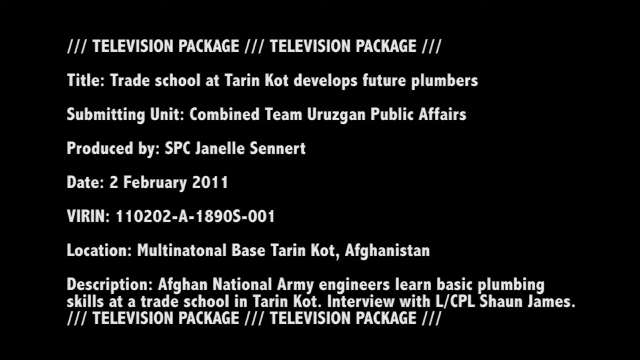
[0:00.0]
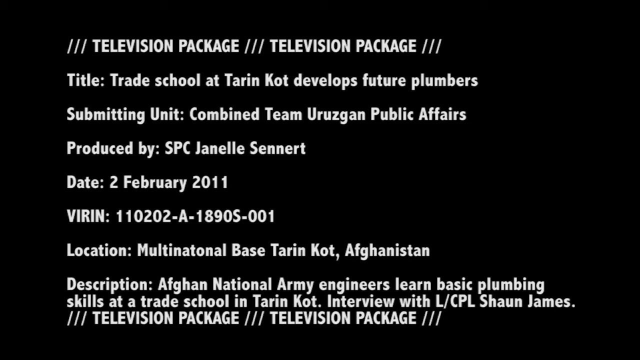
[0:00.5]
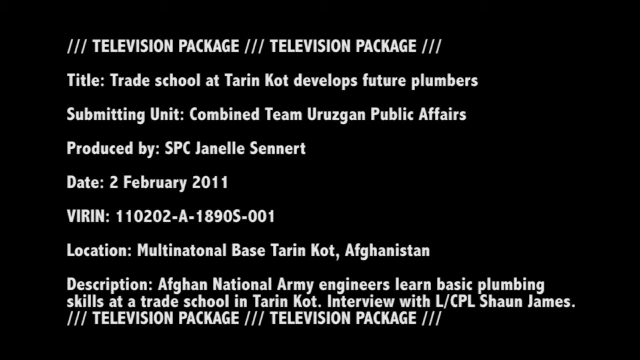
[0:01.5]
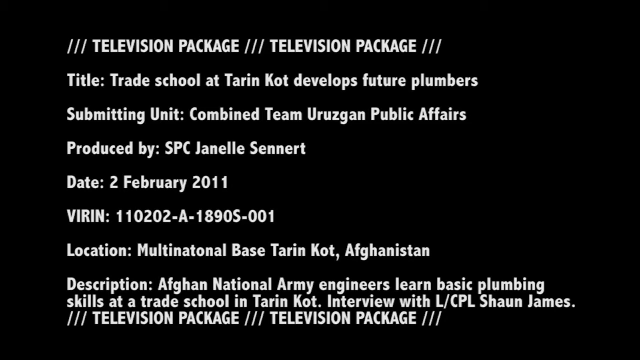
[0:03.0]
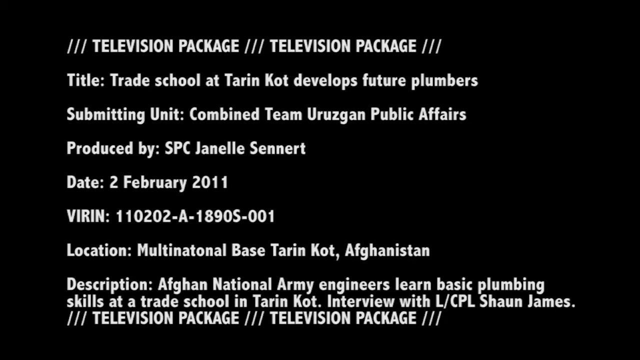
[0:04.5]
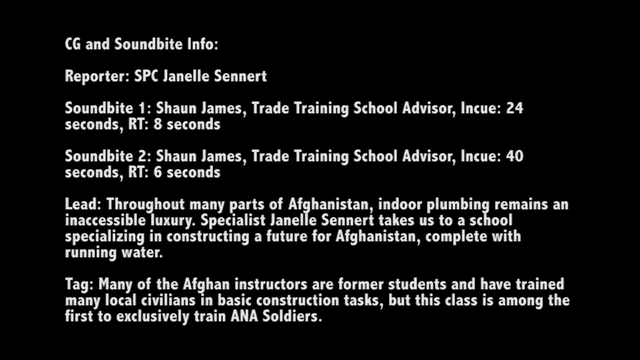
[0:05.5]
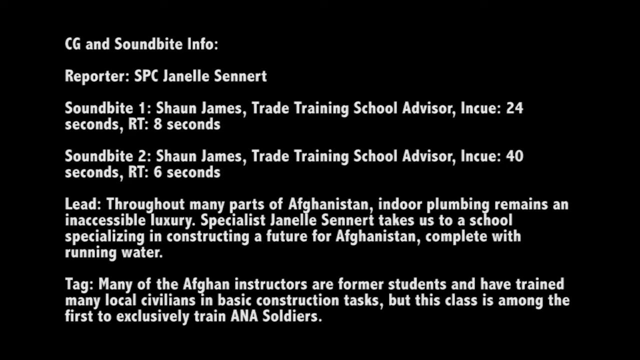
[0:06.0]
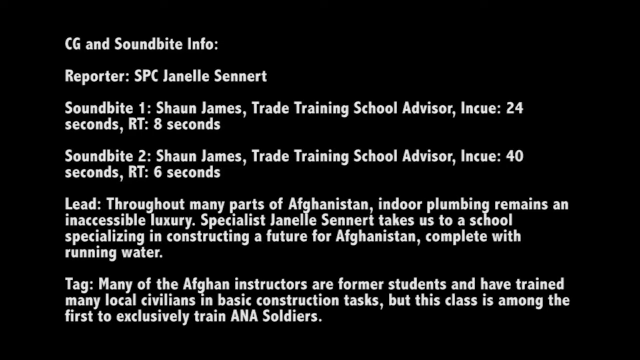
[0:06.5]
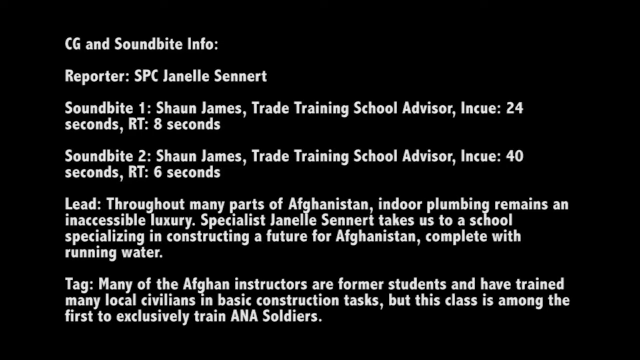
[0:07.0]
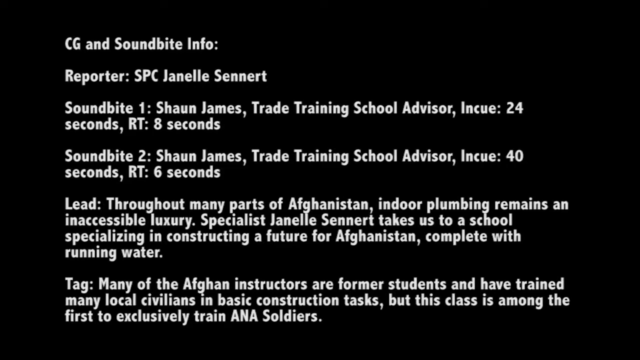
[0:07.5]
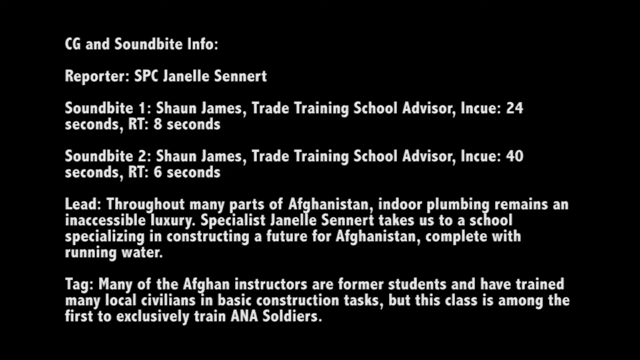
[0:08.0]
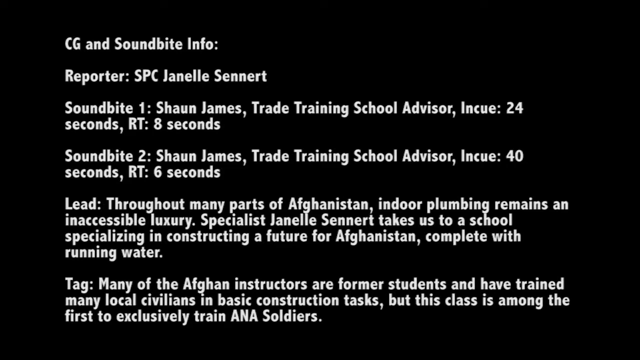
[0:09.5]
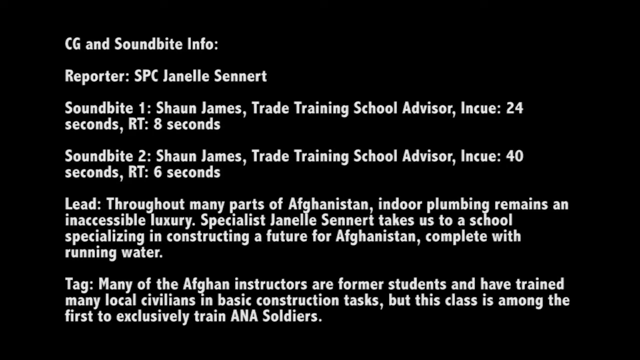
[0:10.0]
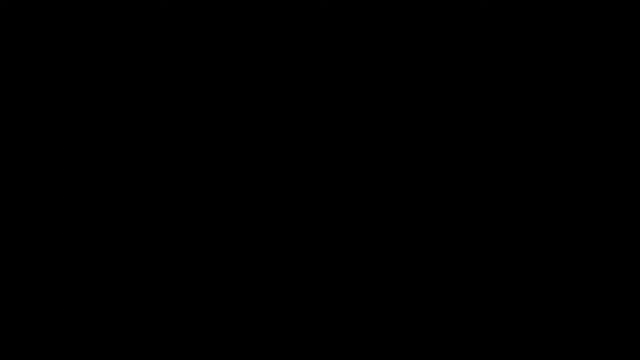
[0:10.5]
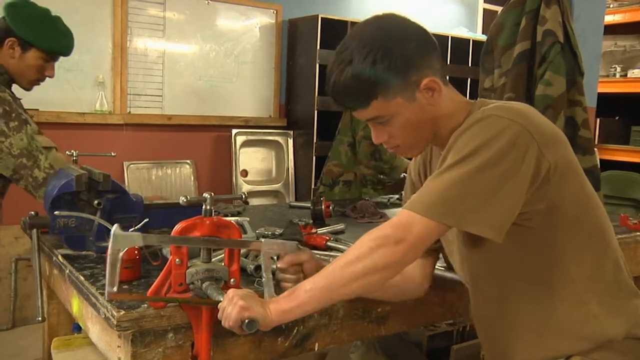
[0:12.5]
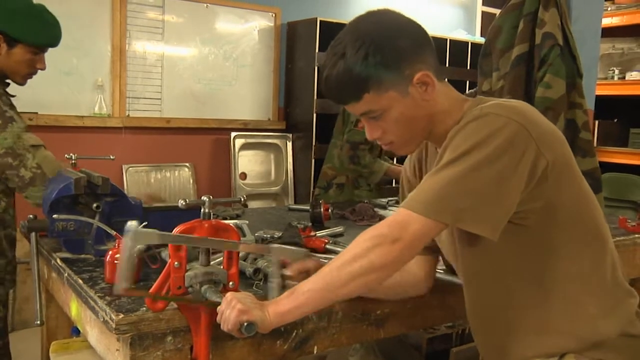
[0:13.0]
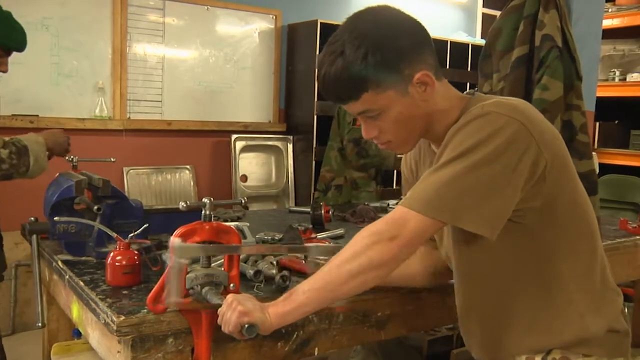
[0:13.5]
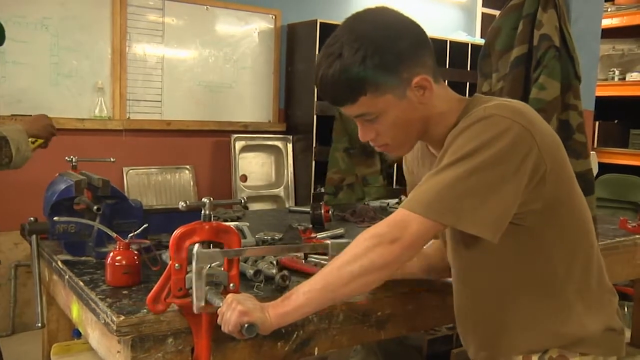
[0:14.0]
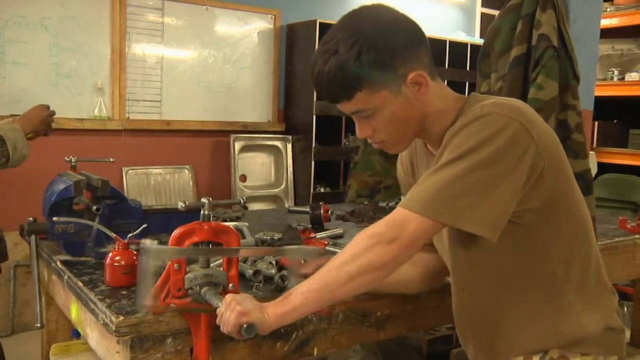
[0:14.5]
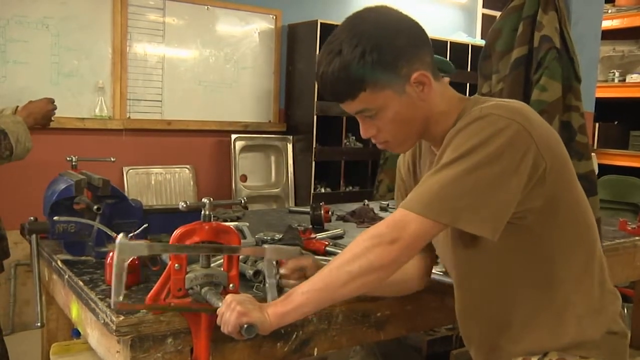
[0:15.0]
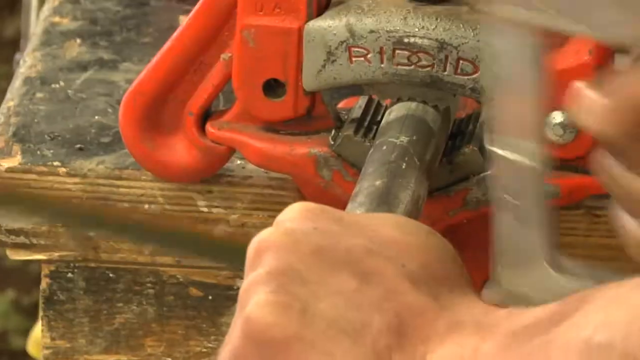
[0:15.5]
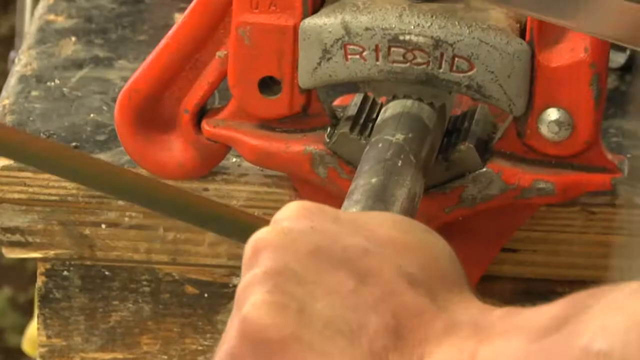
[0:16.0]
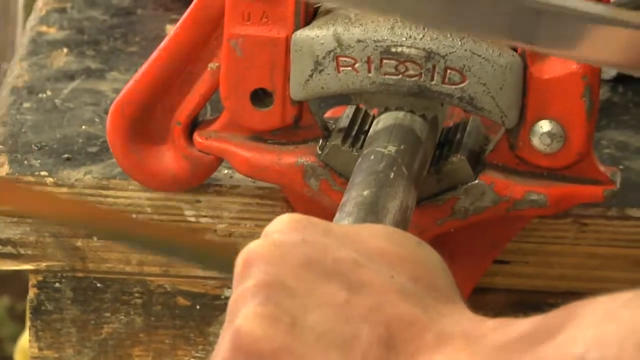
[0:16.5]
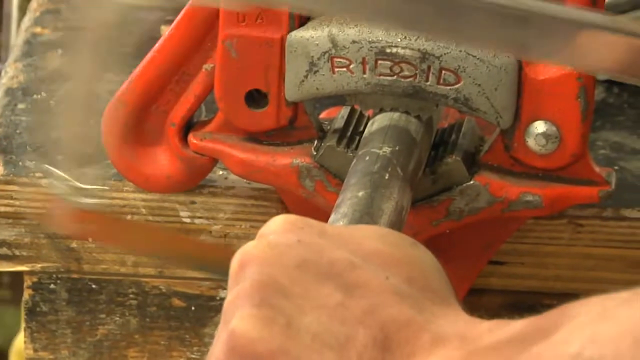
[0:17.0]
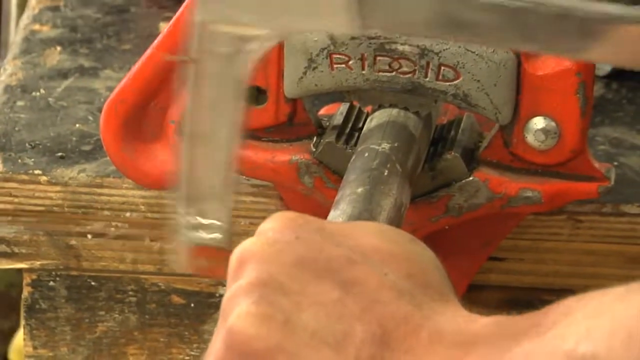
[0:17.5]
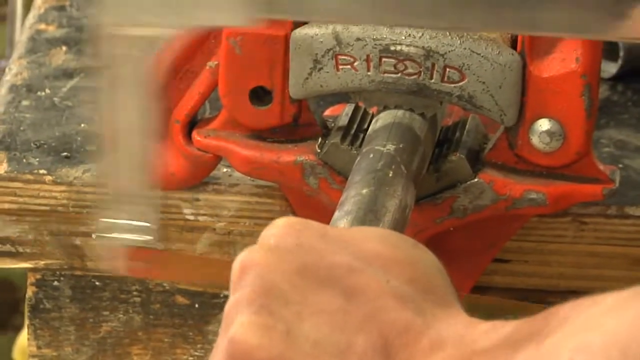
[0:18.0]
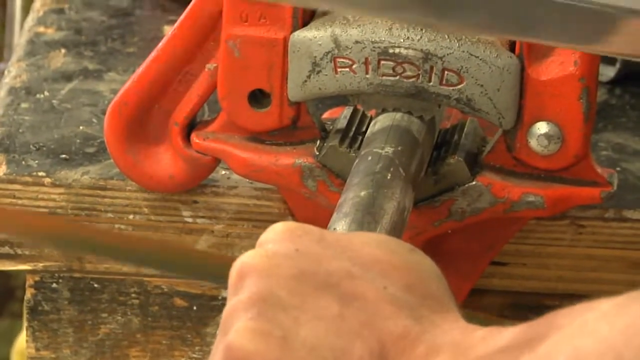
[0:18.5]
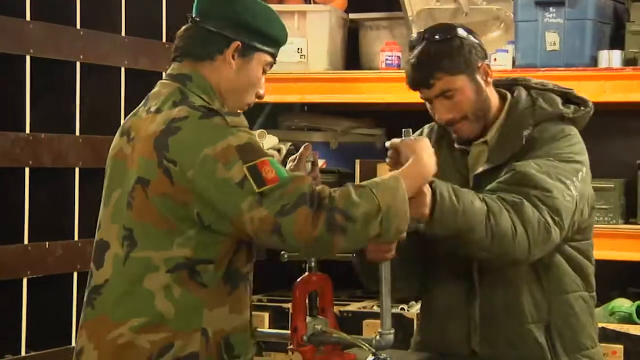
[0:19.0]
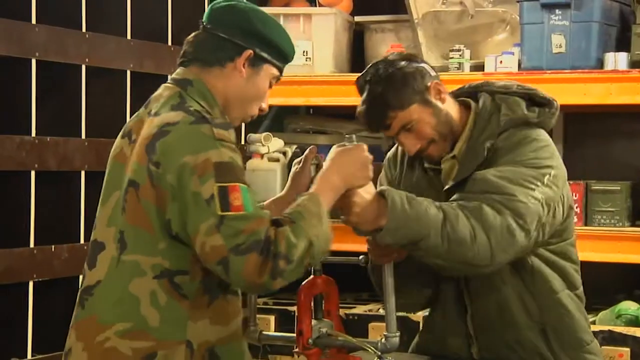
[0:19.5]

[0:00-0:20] The video opens on a still slide with multiple lines of white text on a black background. It reads "television package, television package," followed by "Title, Tradeschool at Tarrant Cot develops future plumbers." It lists a submitting unit of "Combined Team Urgegon Public Affairs," "produced by Specialist Janelle Sennert," the date "2 February, 2011," a VIRIN of "1-1-0-2-0-2-A-1-8-9-0-S-0-0-1," and the location "multinational base, Tarrant Cot, Afghanistan." The description reads "Afghan National Army engineers learn basic plumbing skills at a tradeschool in Tarrant Cot," followed by "Interview with Lance Corporal Sean James" and "television package, television package." The slide then changes to new text reading "CG and soundbite info," listing two soundbites from "Sean James trade training school advisor" with in-cue and run times, along with a lead that includes "Indoor plumbing remains an inaccessible luxury" and "Many of the Afghan instructors are former students and have trained many local civilians in basic construction tasks."